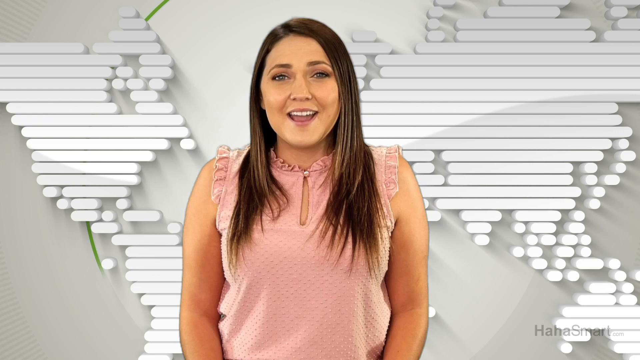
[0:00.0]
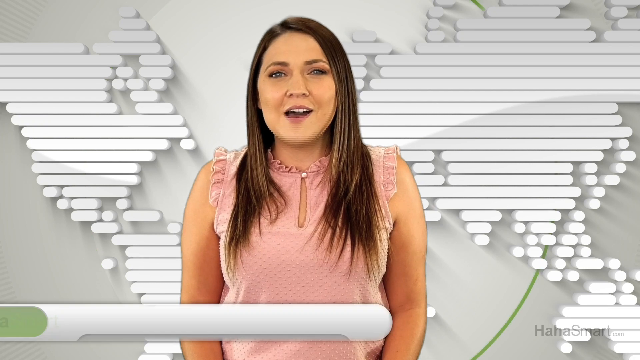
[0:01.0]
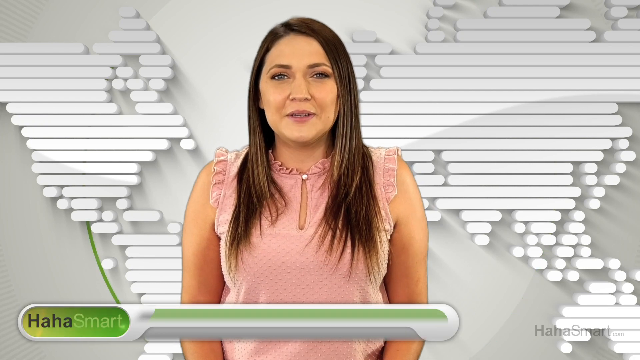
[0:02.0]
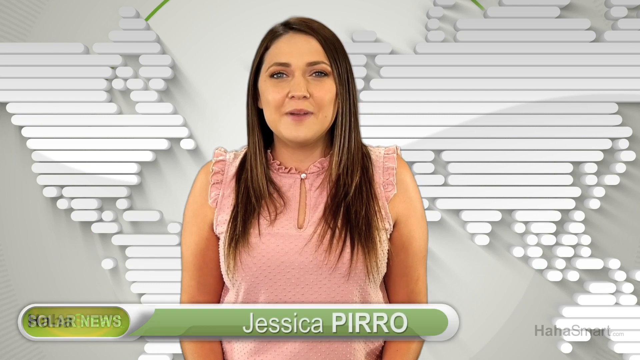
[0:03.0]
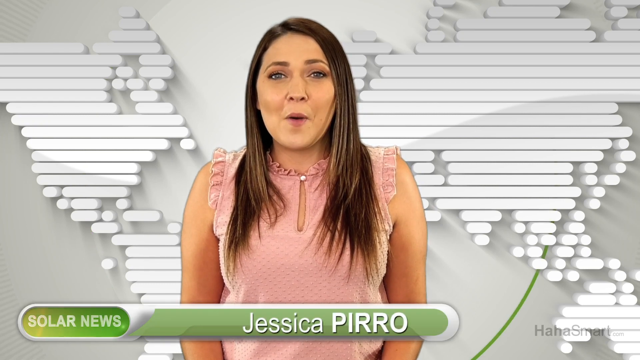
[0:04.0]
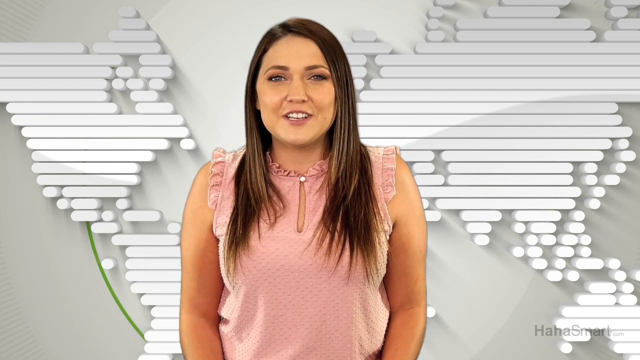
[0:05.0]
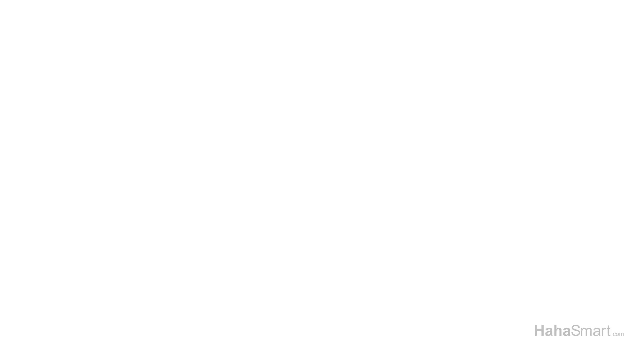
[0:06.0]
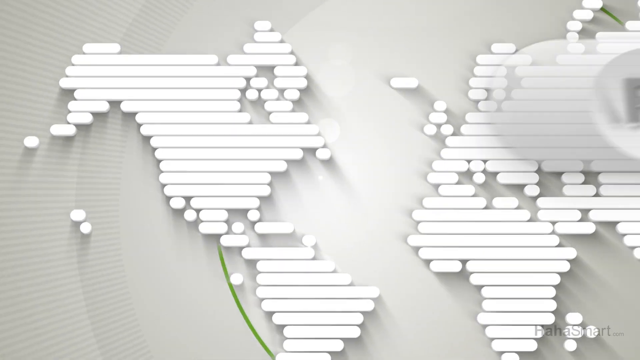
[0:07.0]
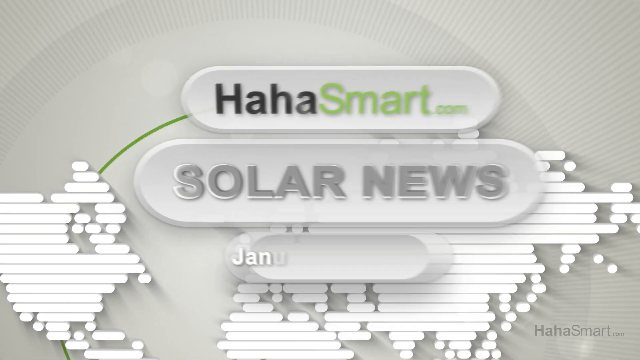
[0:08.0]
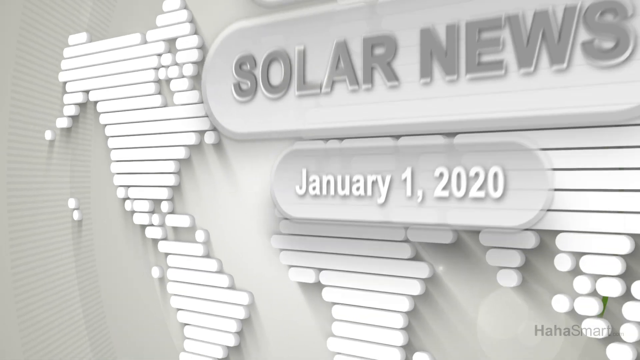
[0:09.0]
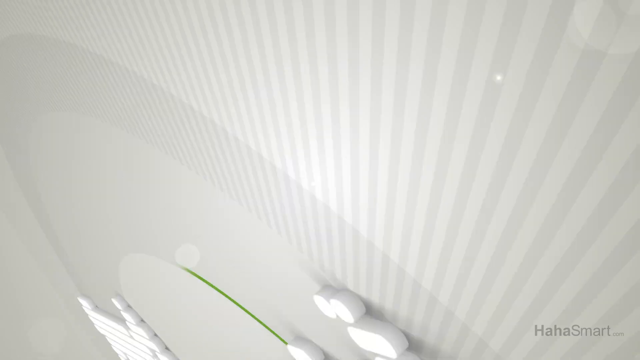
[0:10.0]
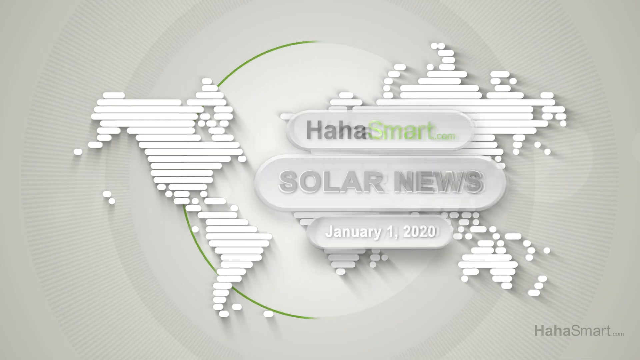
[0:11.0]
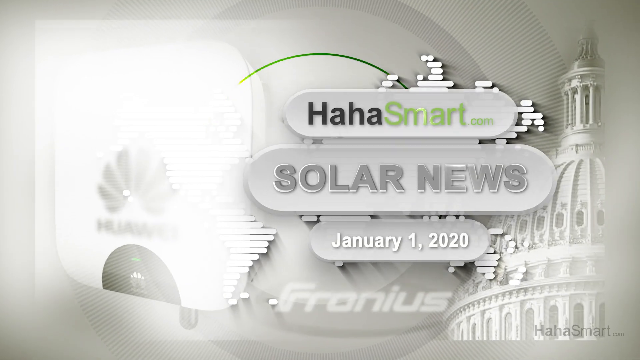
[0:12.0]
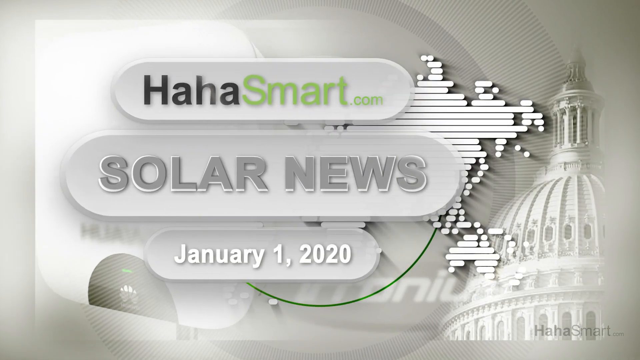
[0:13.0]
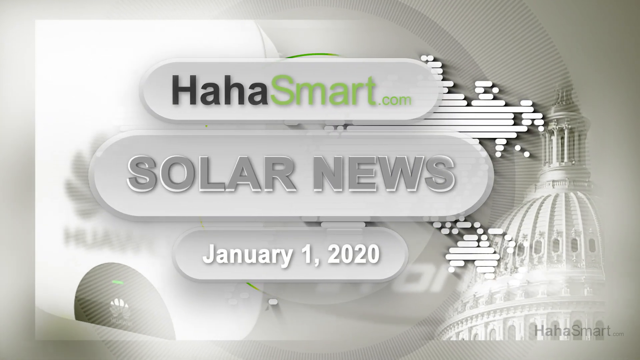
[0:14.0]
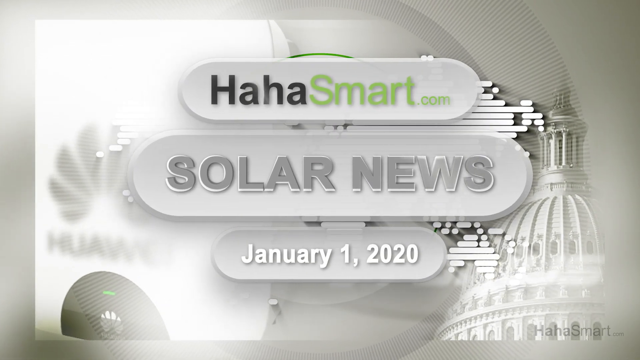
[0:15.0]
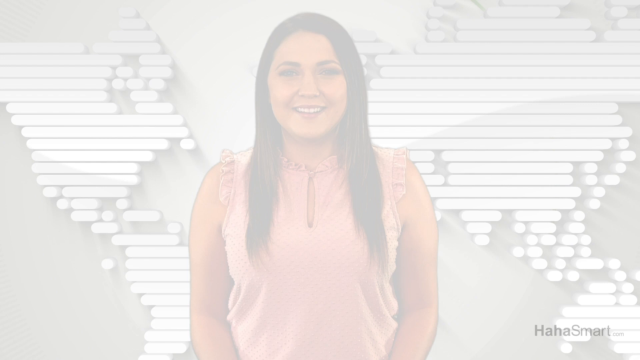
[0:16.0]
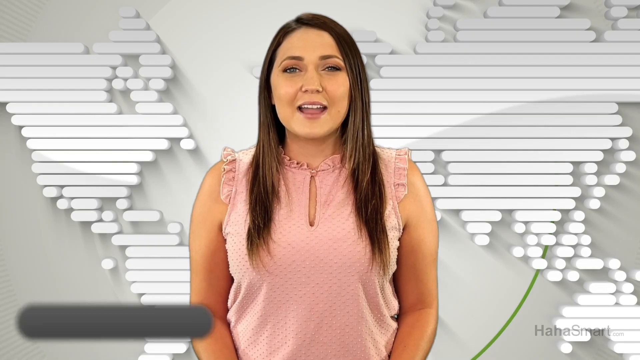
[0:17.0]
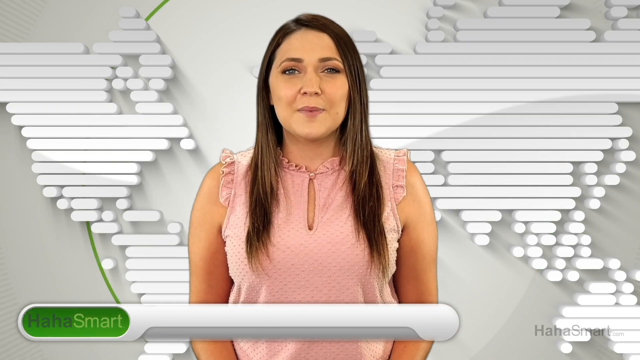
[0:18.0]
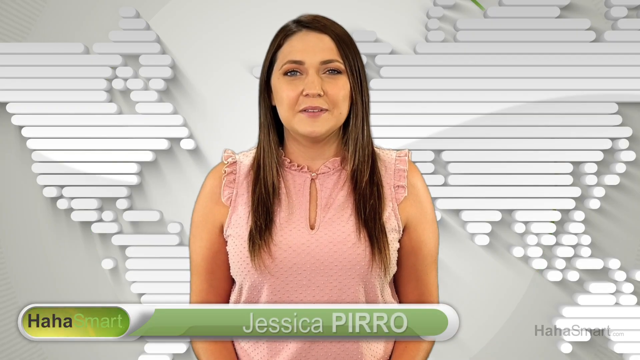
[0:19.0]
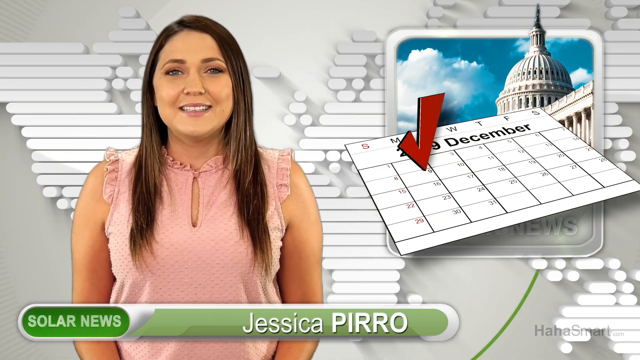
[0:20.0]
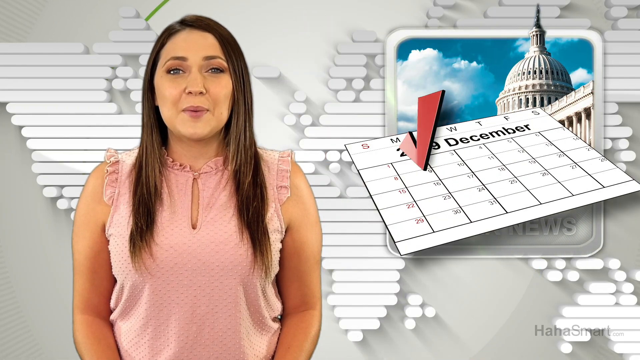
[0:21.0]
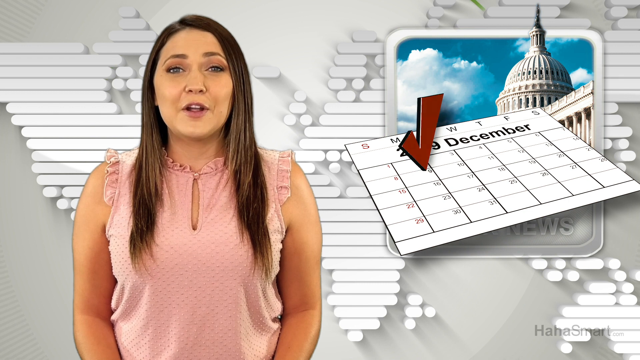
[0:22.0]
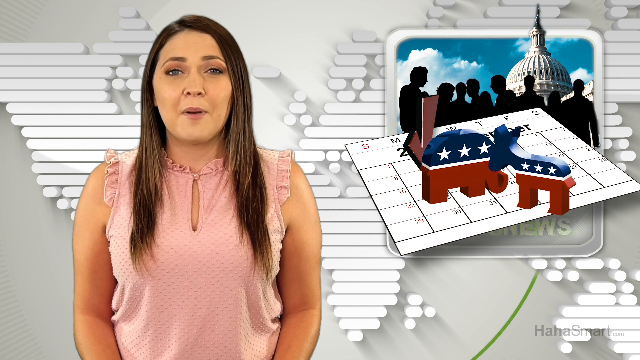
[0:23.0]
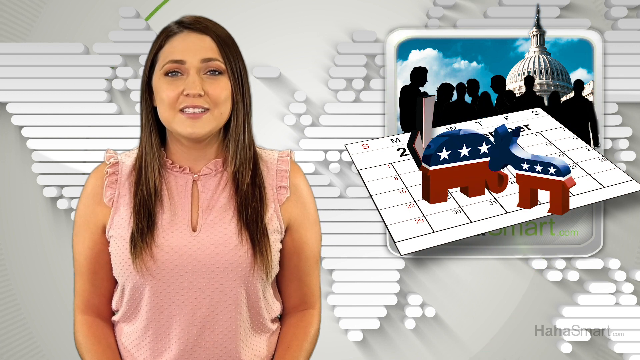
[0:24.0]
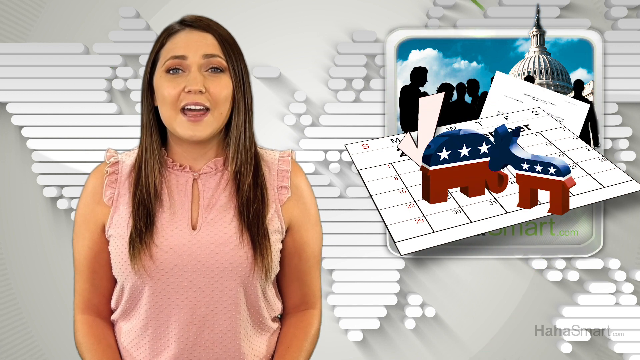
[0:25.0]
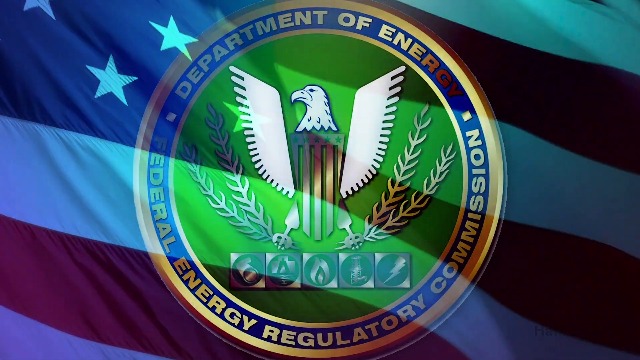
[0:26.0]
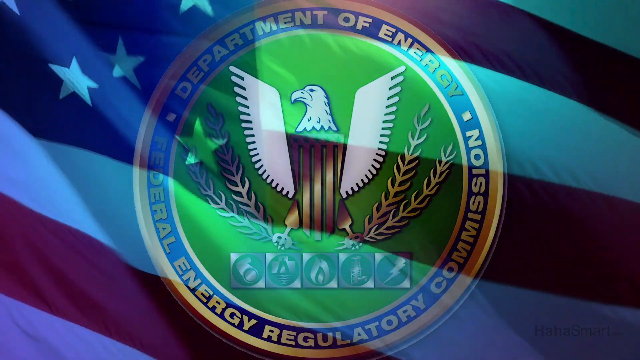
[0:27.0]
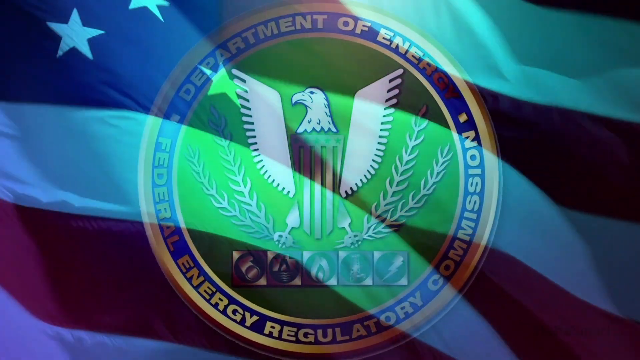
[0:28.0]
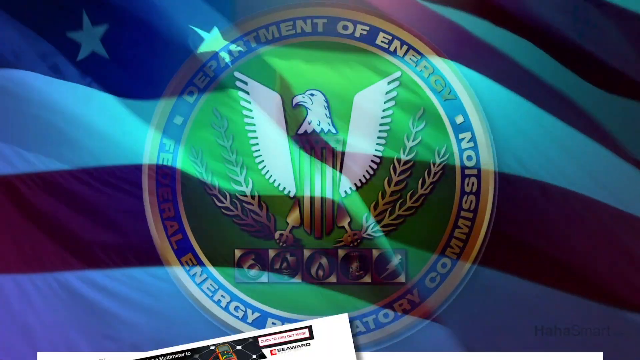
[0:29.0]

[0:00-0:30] A newscast features a reporter named Jessica: at the bottom of the screen an oval with a green interior holds white text reading "Jessica Pirro", and next to it is "solar news", which then fades out. Jessica wears a pink shirt, has long brown hair and is of medium build. Behind her are many white and grayish horizontal lines of different lengths that look like a map of the world. The scene transitions to a screen reading "Haha Smart, Solar News, January 1, 2020", with a Capitol building in the background in the bottom right corner. The words "solar news" are each in a different oval, and they move from left to right across the screen. That fades out and the video returns to Jessica reporting. A calendar comes up on the right-hand side, set at an angle and faded back, with December on it. A check mark appears, along with an elephant and a donkey representing the Republican and Democratic parties. The image flips to a seal of the United States, and then three different letters, like pieces of paper with writing on them, come into view.